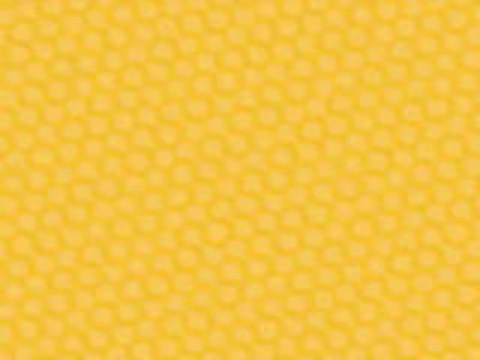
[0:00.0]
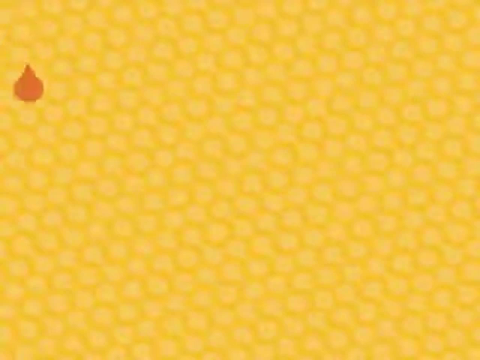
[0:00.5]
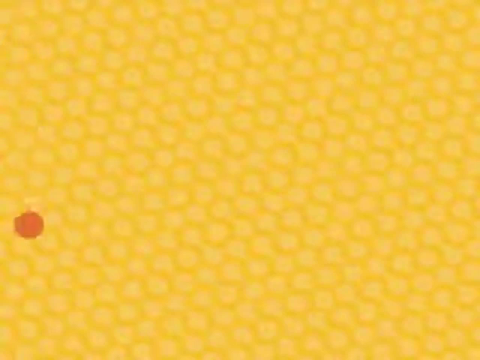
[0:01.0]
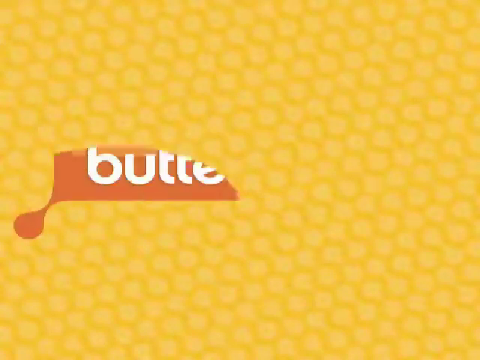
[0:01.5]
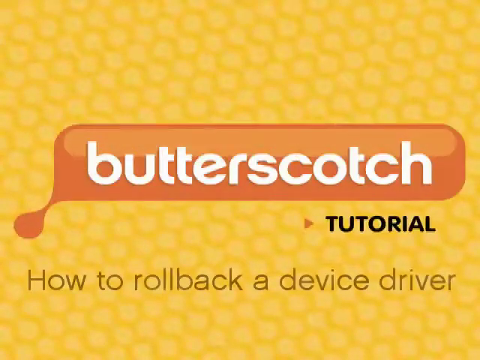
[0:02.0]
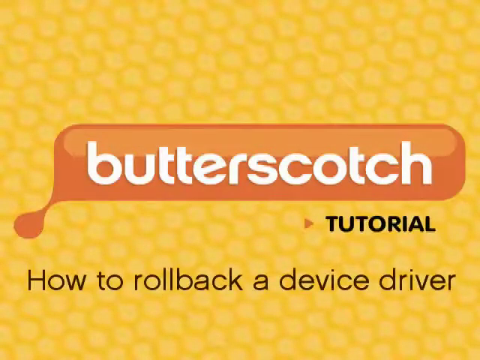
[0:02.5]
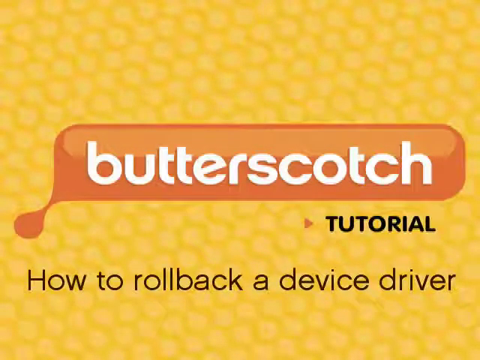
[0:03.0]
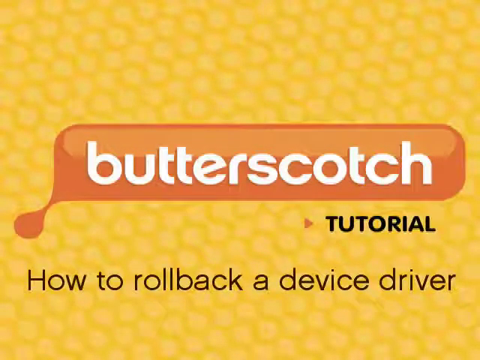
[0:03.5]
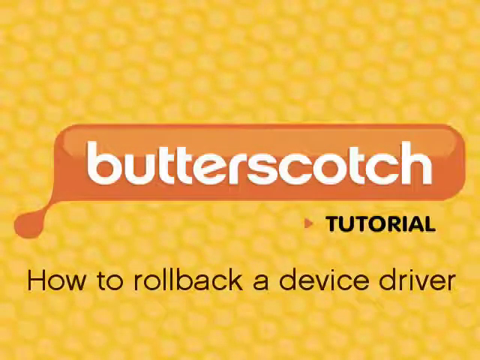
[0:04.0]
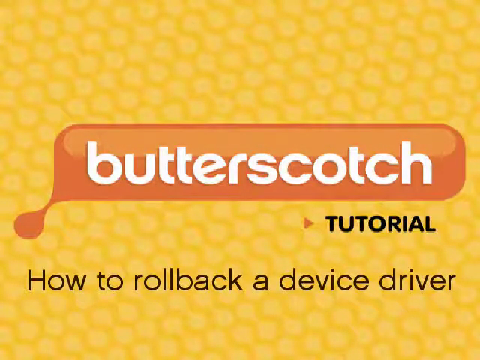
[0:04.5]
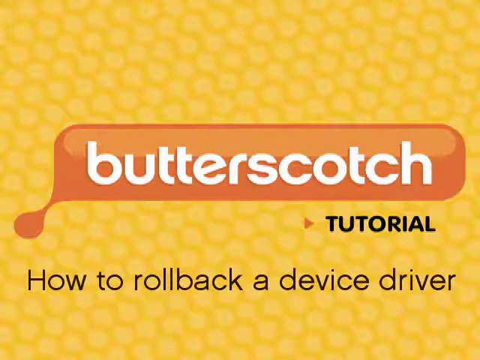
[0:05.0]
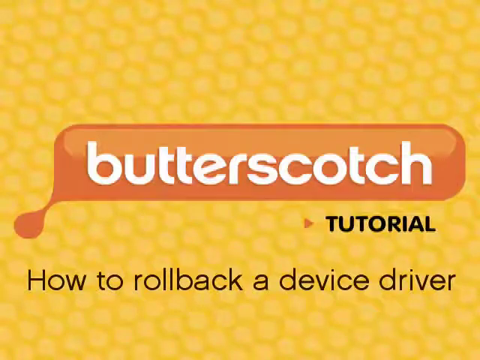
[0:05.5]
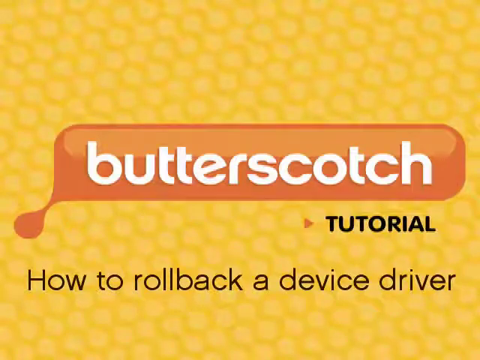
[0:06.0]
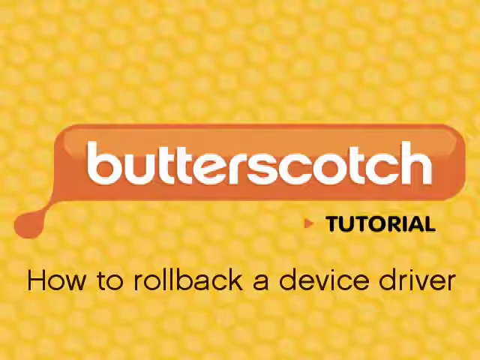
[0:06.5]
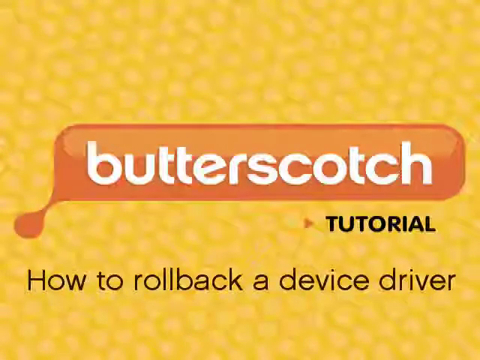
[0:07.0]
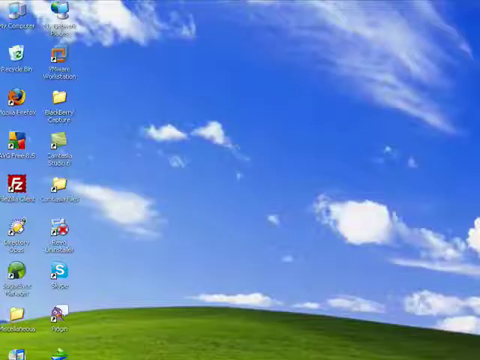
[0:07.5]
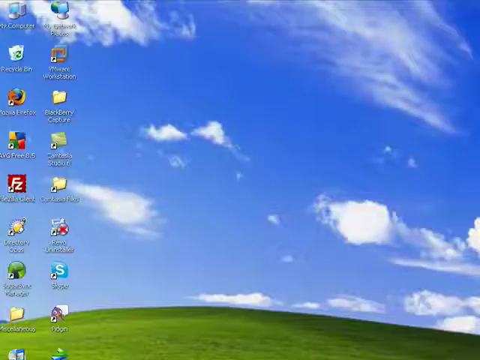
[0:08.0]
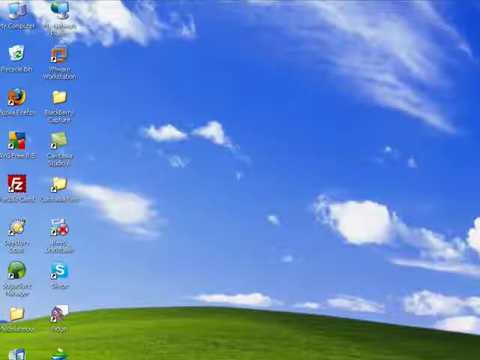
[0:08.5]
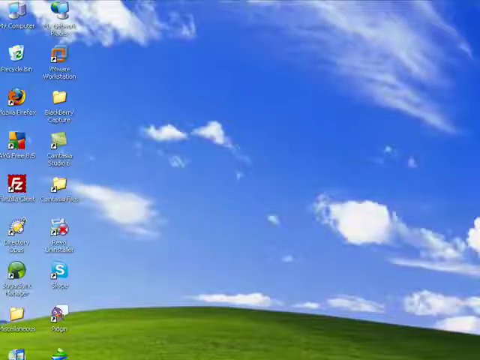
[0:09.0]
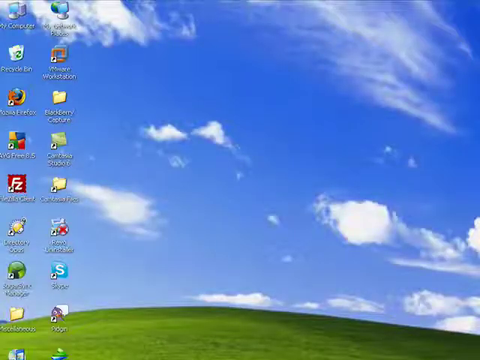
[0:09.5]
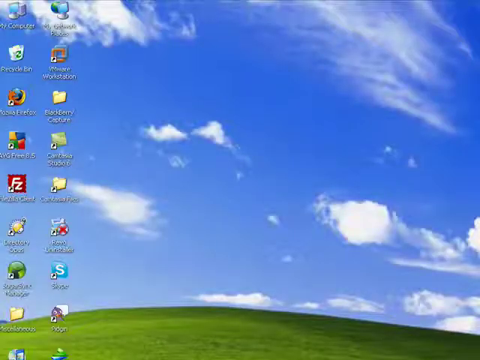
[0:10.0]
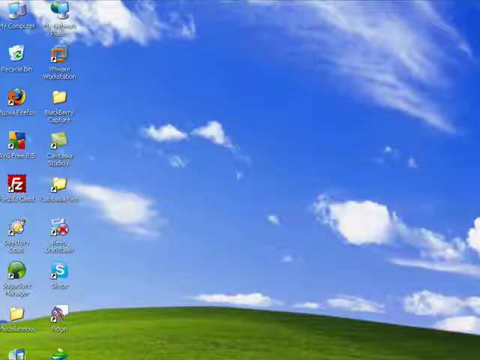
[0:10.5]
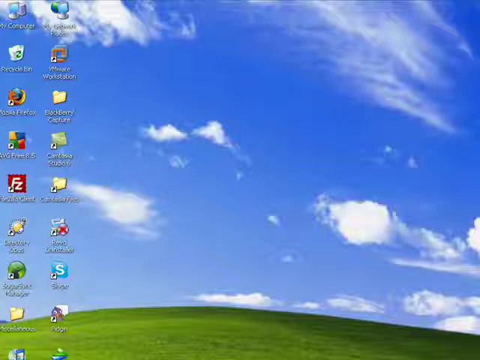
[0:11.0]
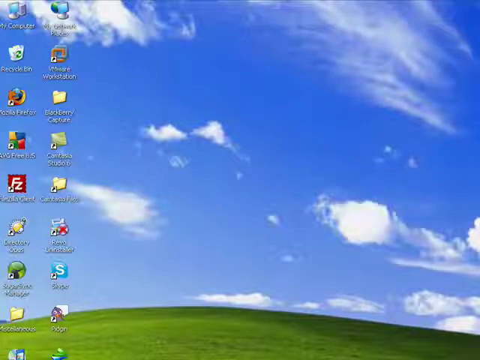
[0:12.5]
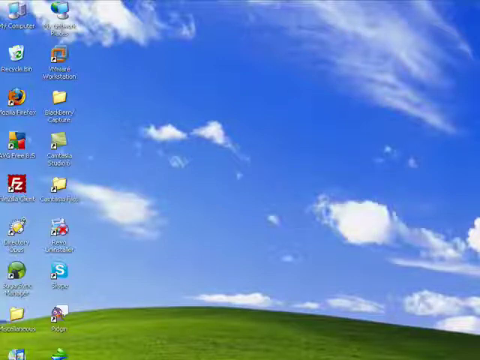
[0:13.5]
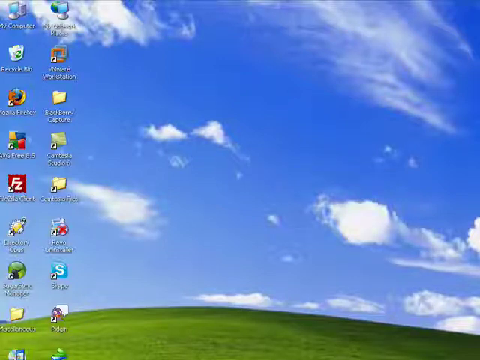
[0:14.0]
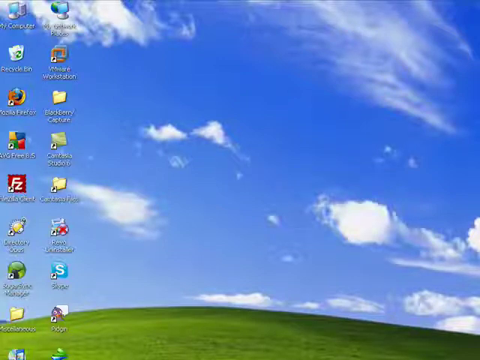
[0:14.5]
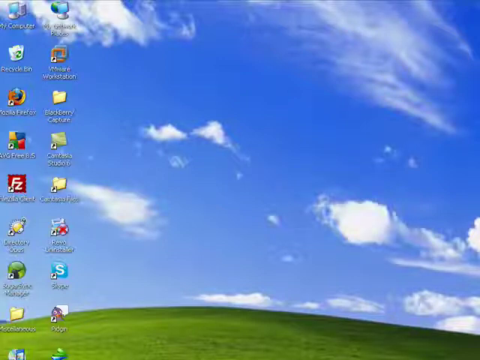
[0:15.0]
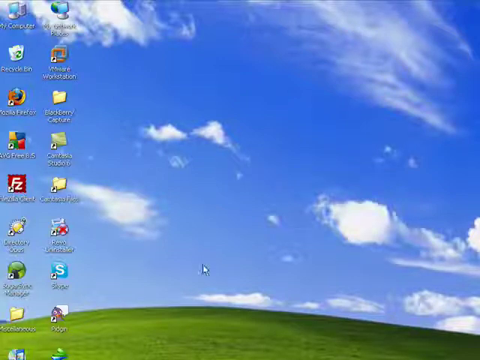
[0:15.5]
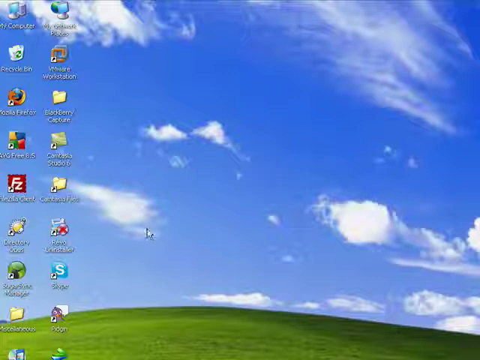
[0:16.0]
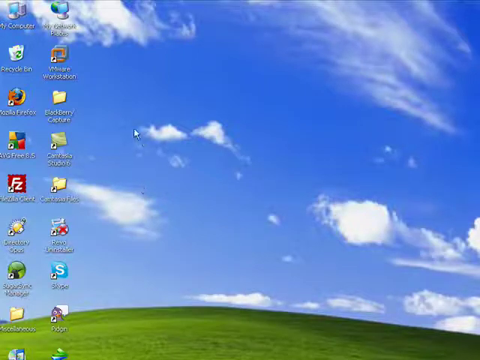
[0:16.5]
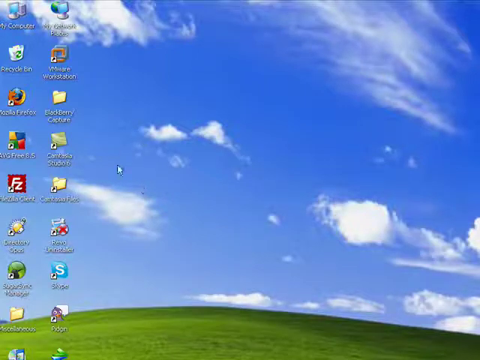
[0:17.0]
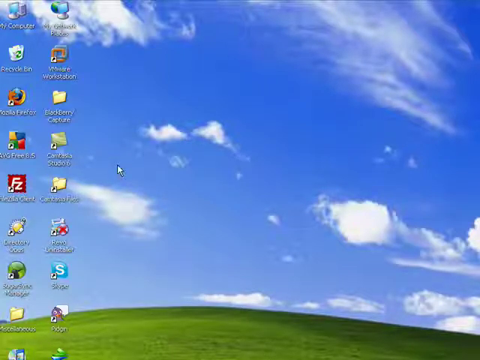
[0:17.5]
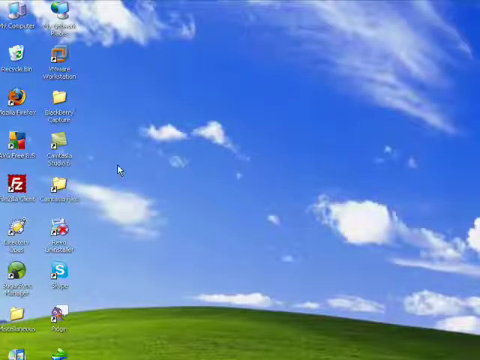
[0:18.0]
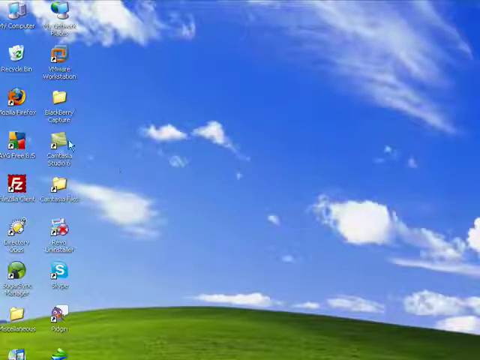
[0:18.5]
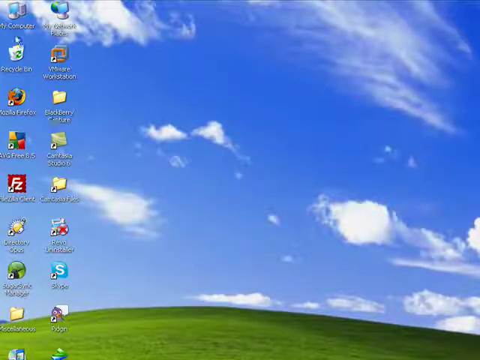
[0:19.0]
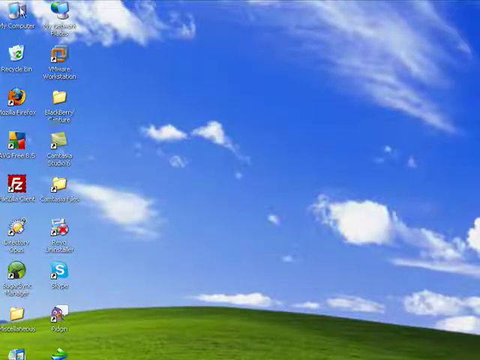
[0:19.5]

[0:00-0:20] The video opens on a yellow slide: a big square screen covered in very small, oval-shaped, light yellow objects arranged in a sort of beehive fashion, so the whole thing is yellow and looks like a honeycomb. A drop comes down and turns into a banner that says "butterscotch," and then text reading "tutorial, how to roll back a device driver" appears on the honeycomb picture. The view then moves to a computer home screen with the usual icons: My Computer is at the top left, as on Windows-based computers, and many other icons are on the left-hand side. The background is the standard Microsoft Windows one with clouds, blue sky and a hill underneath. The cursor moves around, goes up to pick My Computer and opens it, and the beehive honeycomb screen appears again.